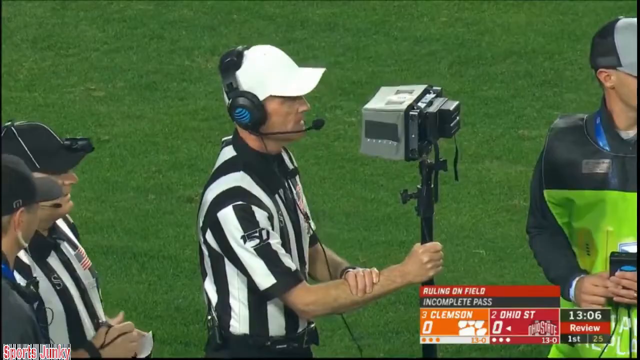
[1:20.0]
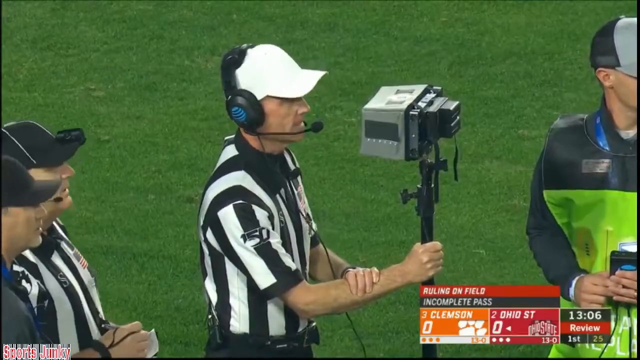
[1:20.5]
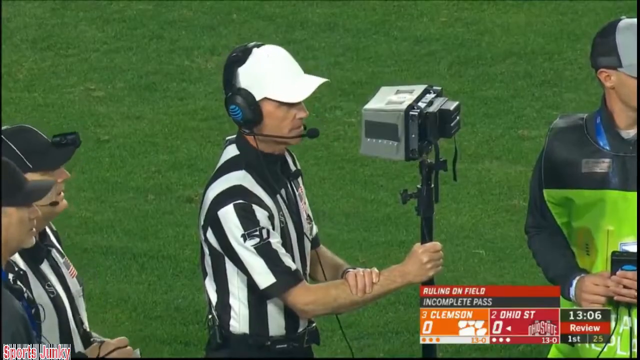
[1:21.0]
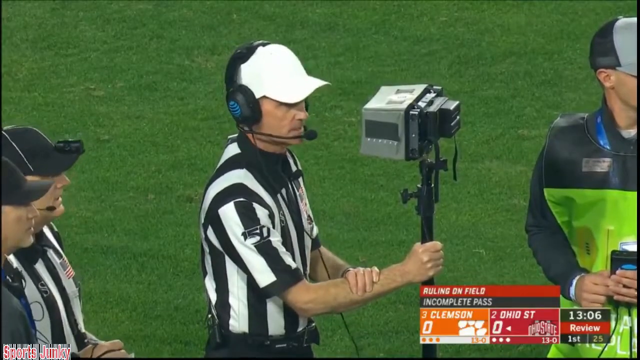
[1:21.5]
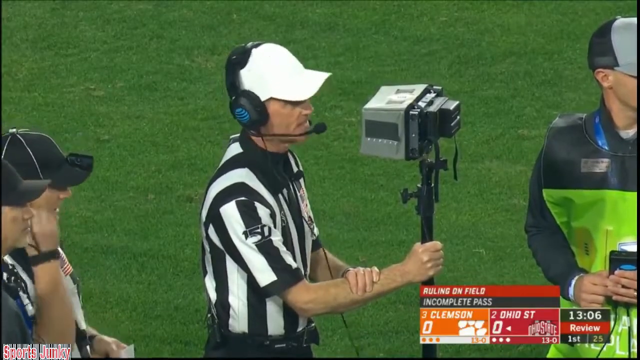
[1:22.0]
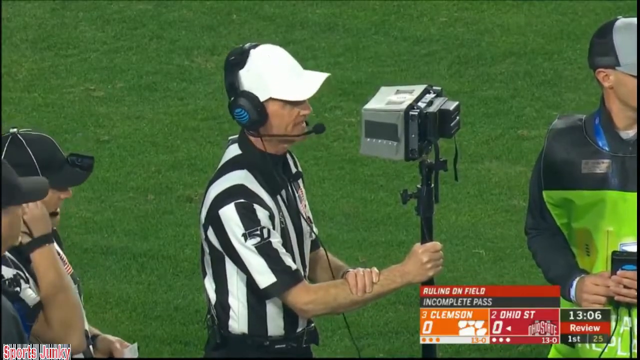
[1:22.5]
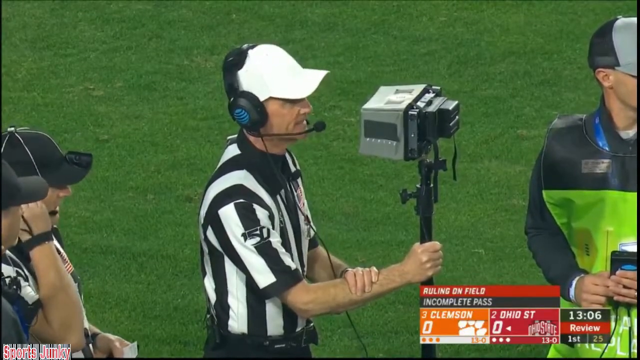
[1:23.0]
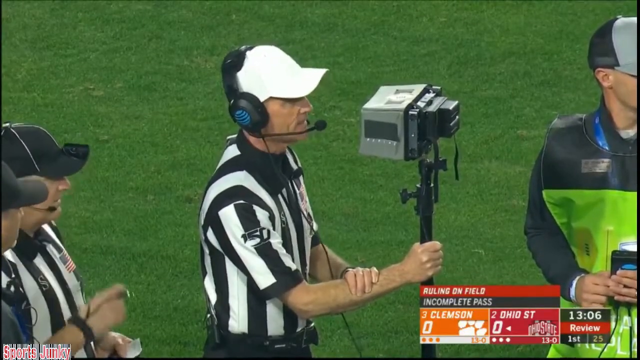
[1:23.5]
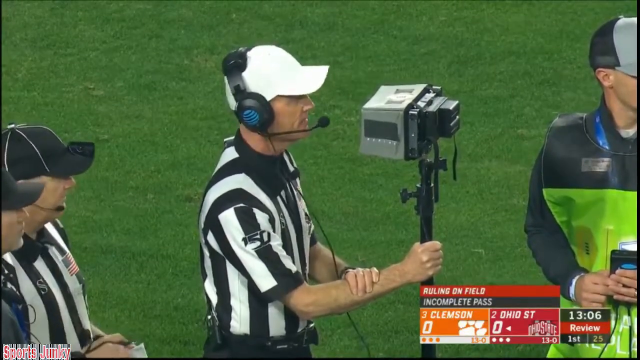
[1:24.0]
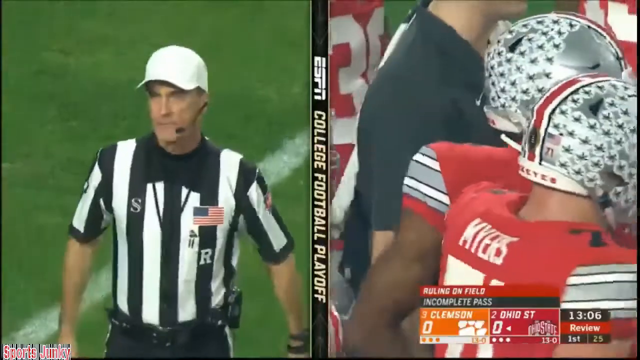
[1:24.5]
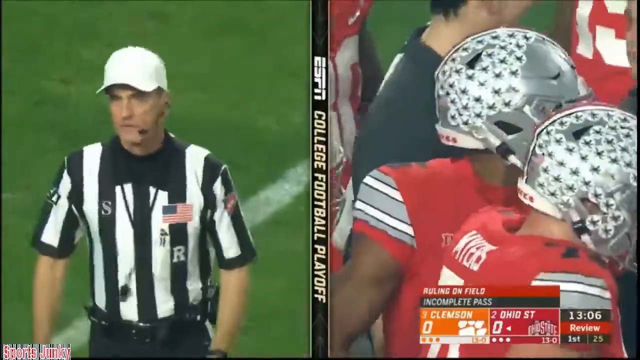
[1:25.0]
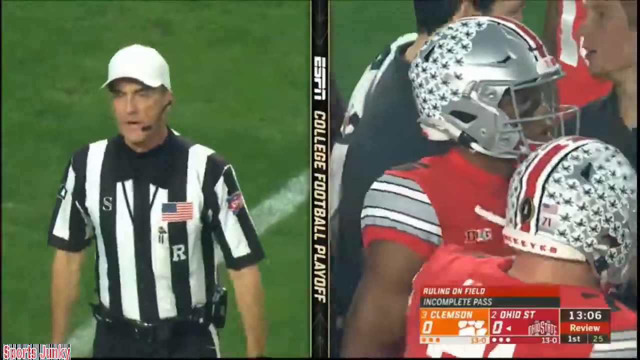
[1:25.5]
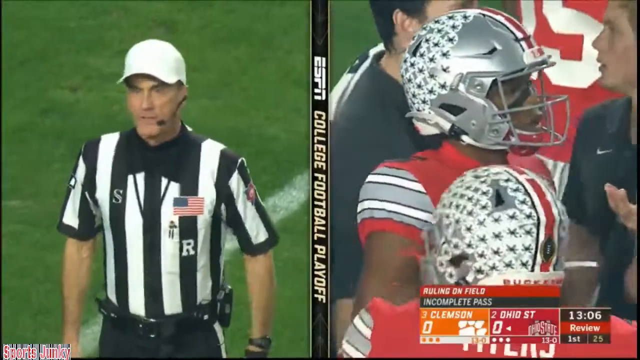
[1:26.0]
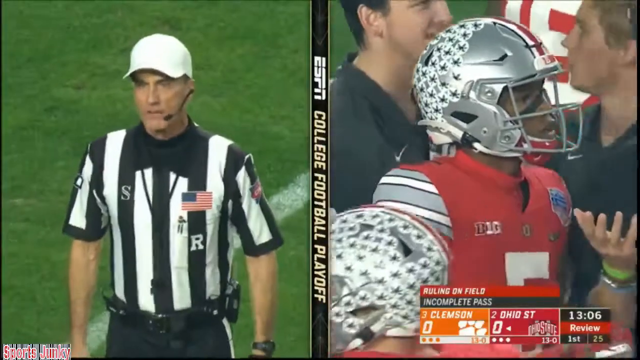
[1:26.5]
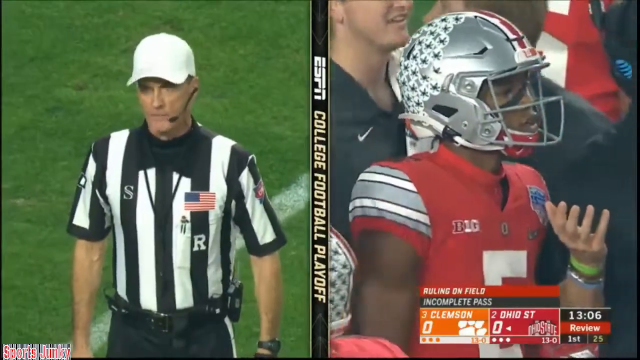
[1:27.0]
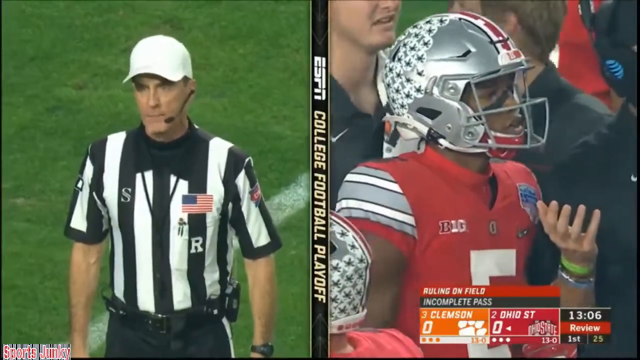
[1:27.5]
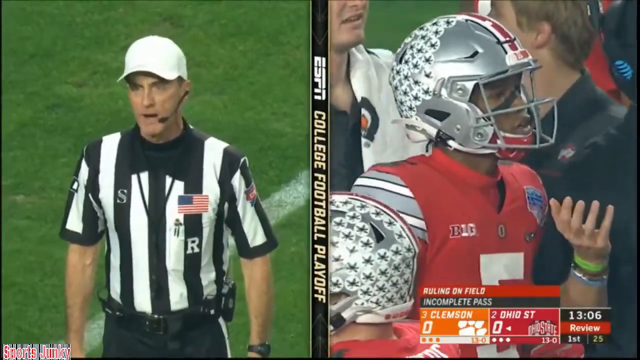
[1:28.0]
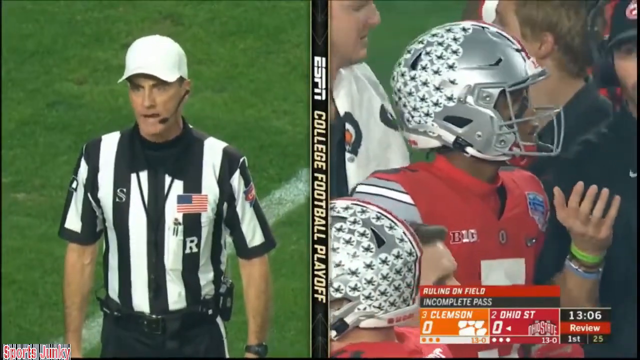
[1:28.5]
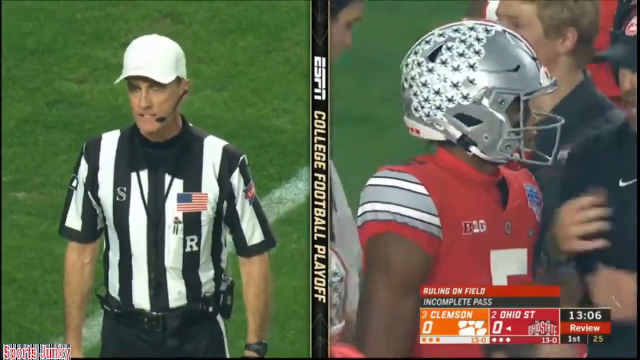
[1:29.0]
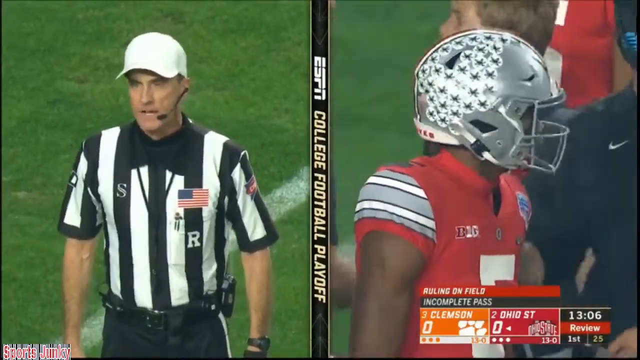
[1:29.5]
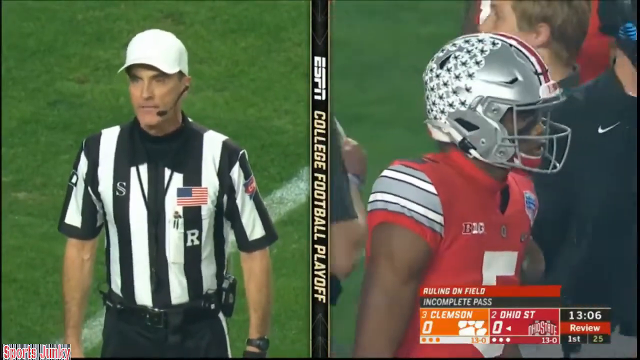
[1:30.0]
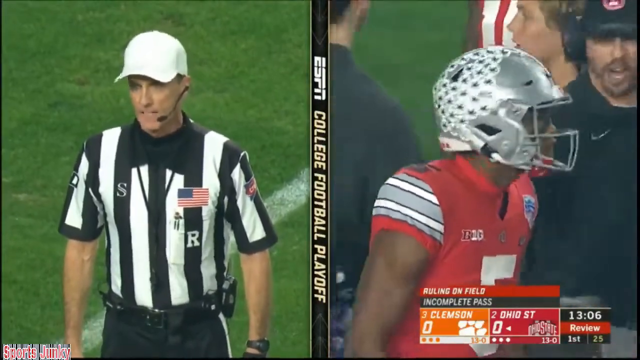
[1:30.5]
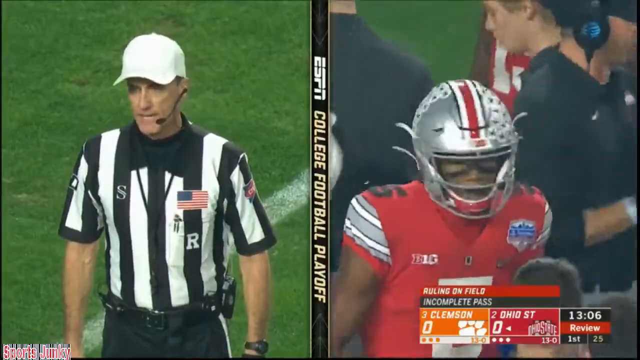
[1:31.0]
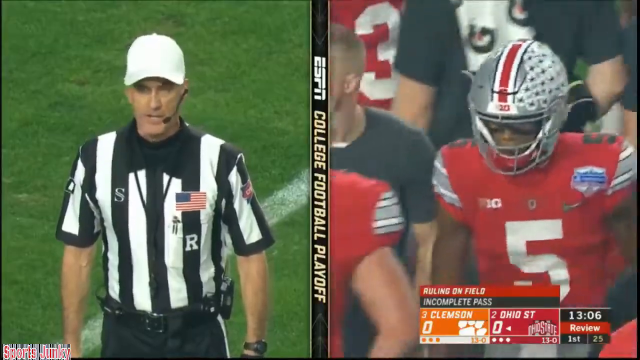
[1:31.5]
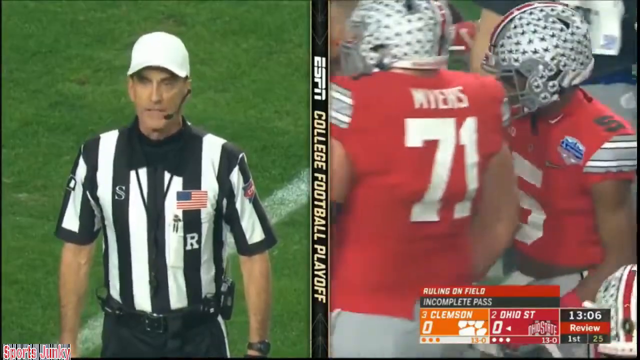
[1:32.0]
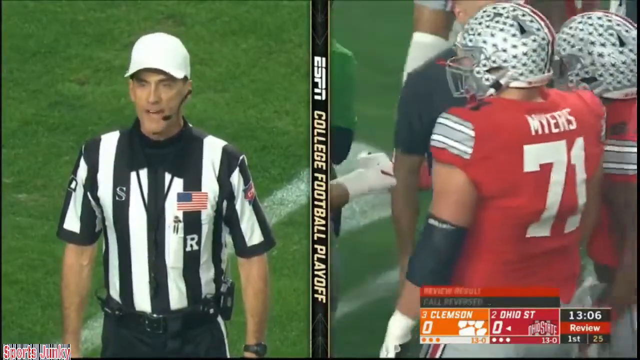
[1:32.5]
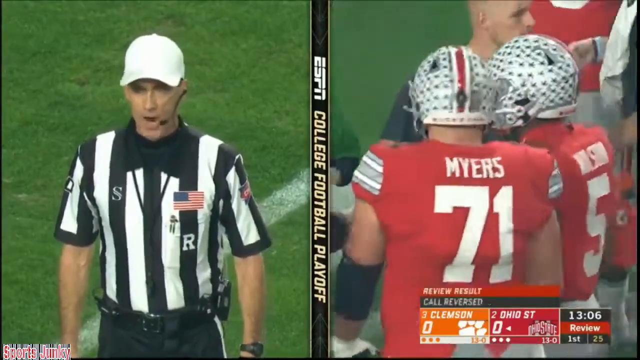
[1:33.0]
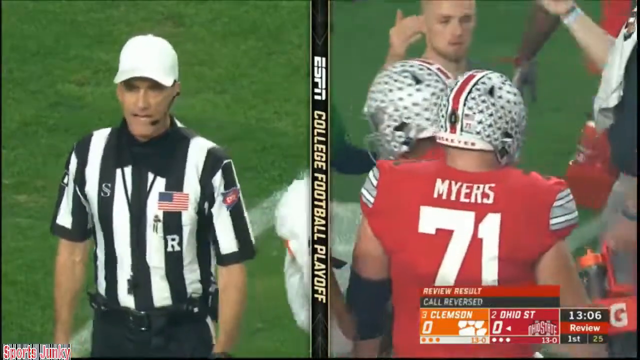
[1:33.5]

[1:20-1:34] In ESPN's college football playoff game, the PlayStation Fiesta, the Clemson Tigers wear orange pants and white shirts, and the Ohio State Buckeyes wear red shirts and gray pants with red stripes. Ohio State has just thrown a pass close to the end zone, and the play is being reviewed to see whether the receiver was inbounds or out of bounds. A referee looks at the replay, and a diagram at the bottom says "ruling on the field was an incomplete pass" while the review continues. The call is reversed, giving Ohio State first down and goal.